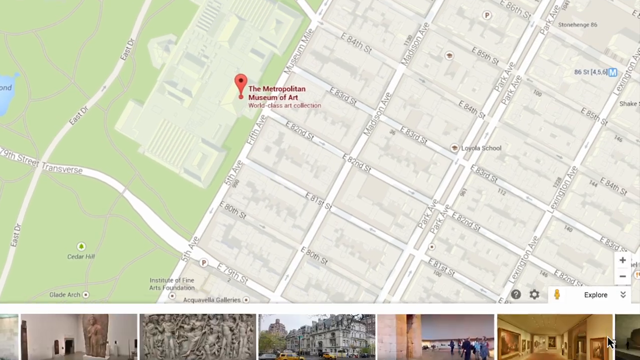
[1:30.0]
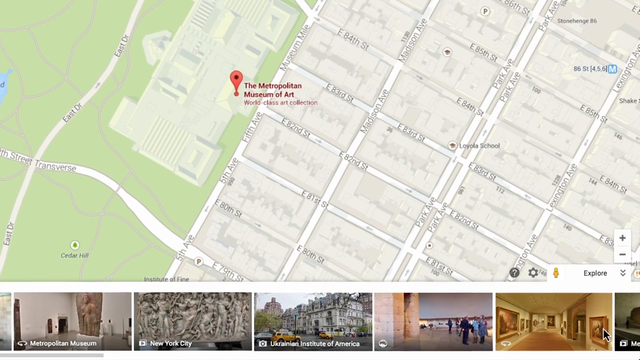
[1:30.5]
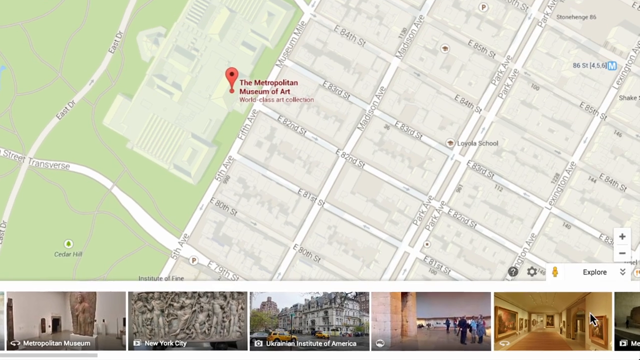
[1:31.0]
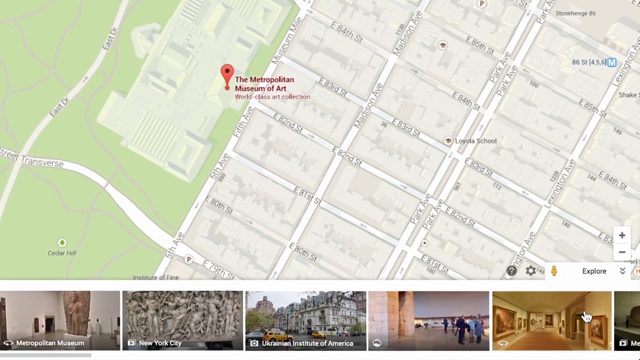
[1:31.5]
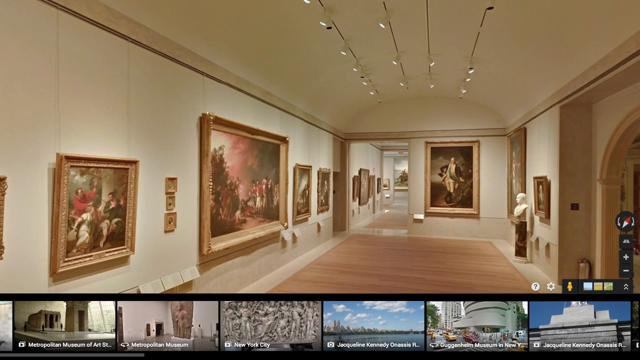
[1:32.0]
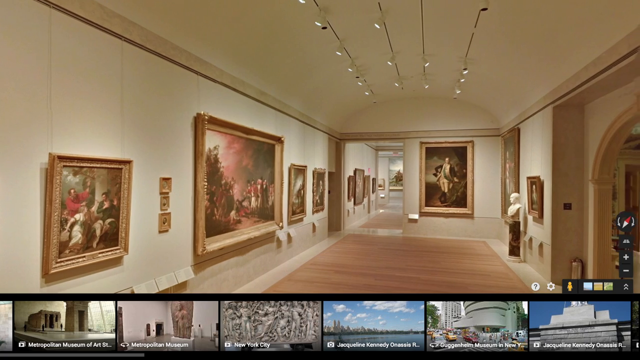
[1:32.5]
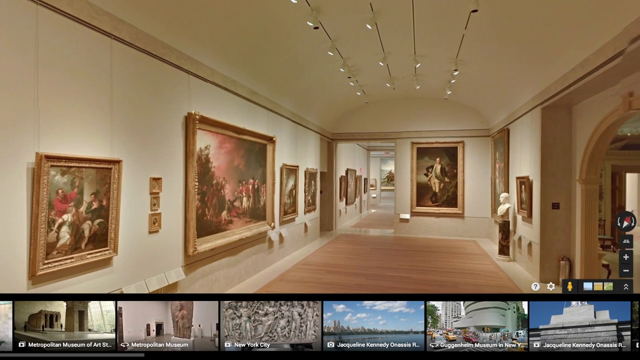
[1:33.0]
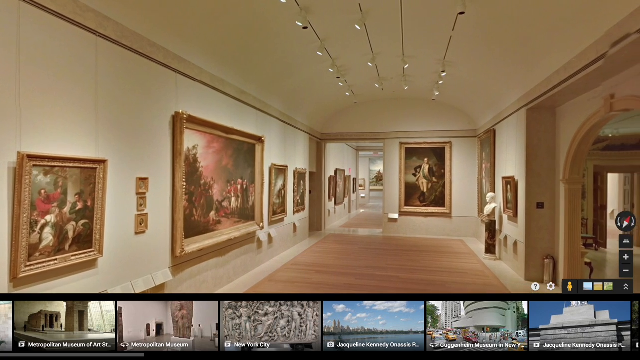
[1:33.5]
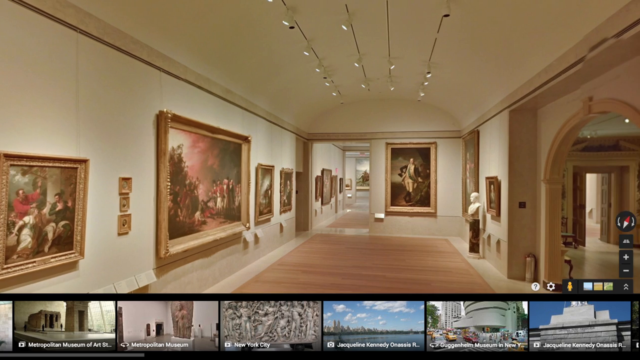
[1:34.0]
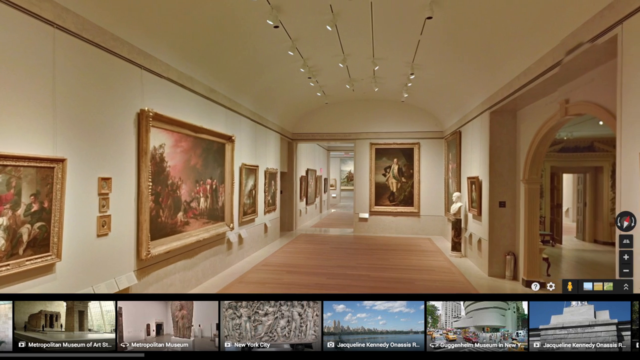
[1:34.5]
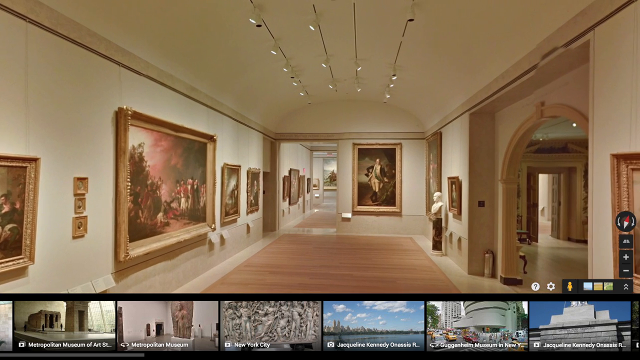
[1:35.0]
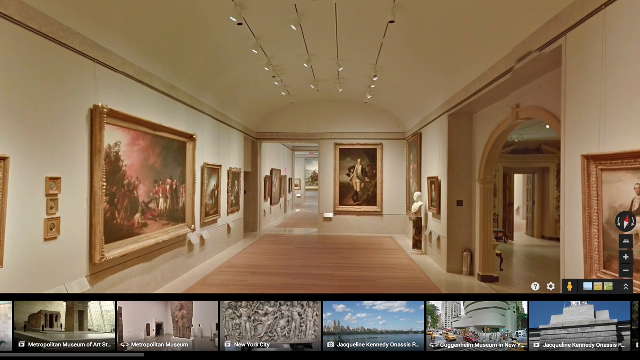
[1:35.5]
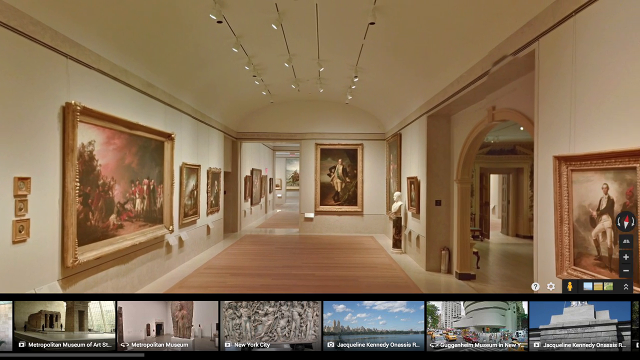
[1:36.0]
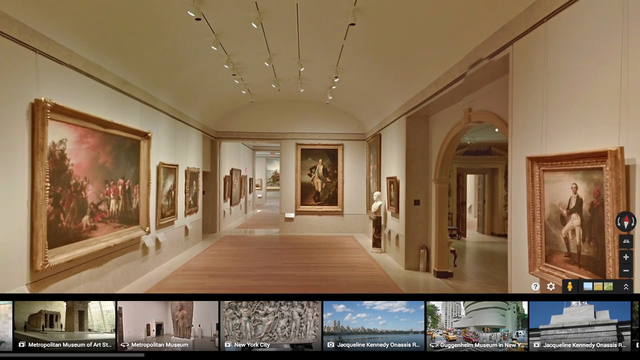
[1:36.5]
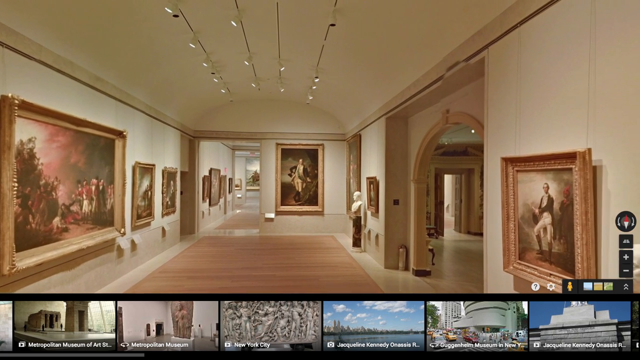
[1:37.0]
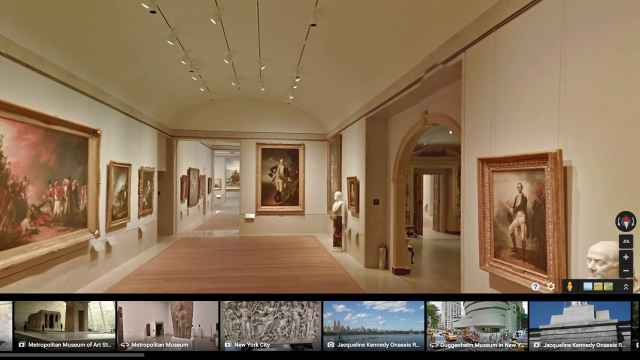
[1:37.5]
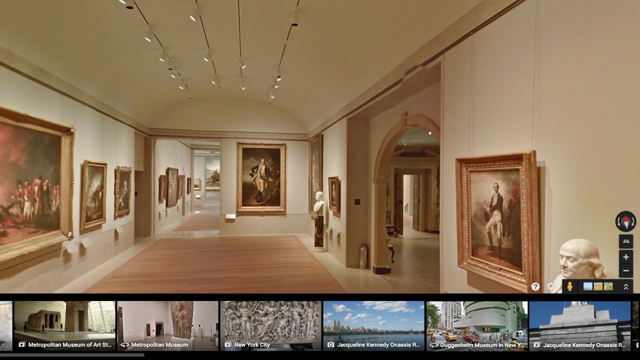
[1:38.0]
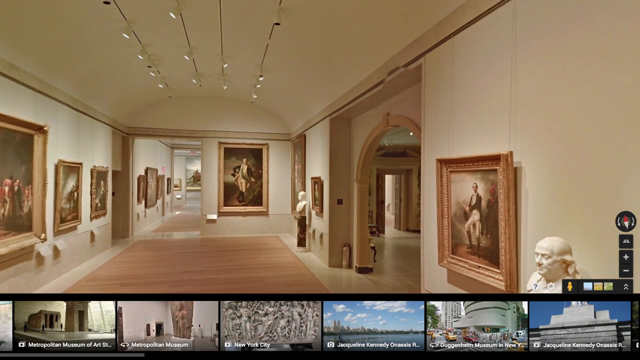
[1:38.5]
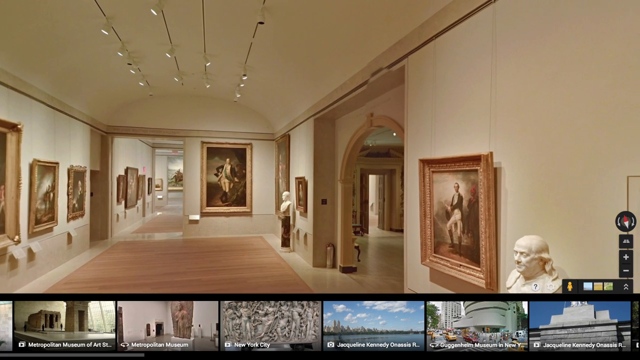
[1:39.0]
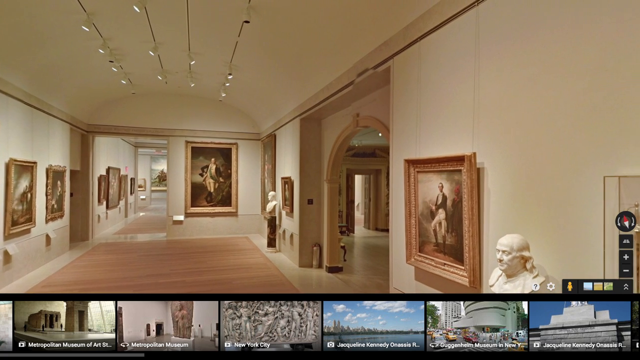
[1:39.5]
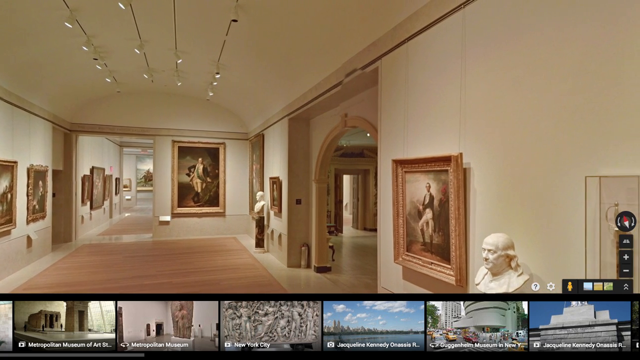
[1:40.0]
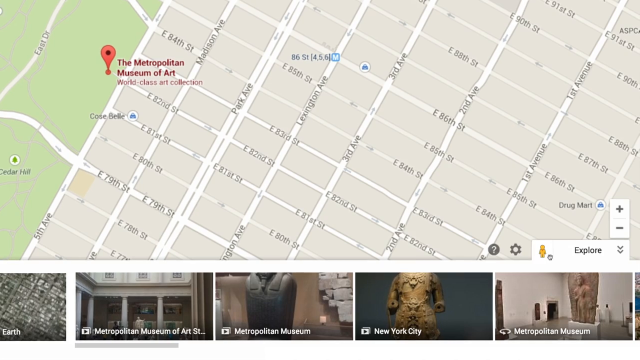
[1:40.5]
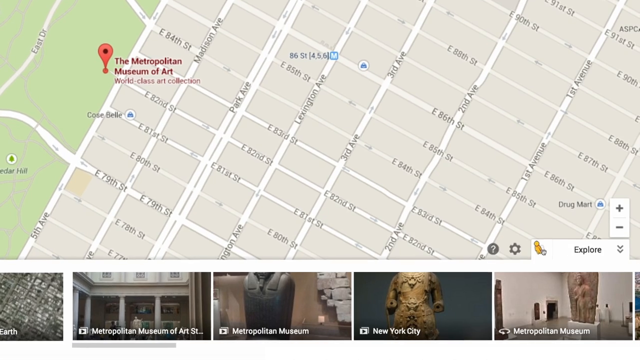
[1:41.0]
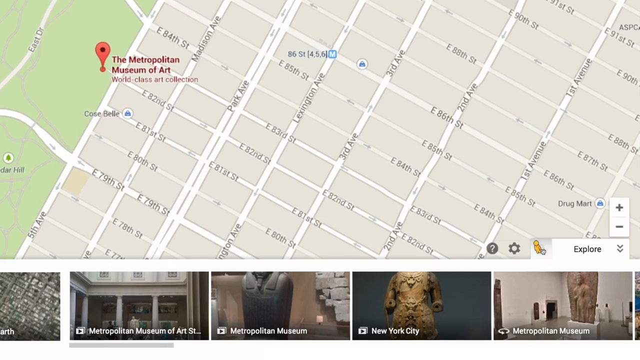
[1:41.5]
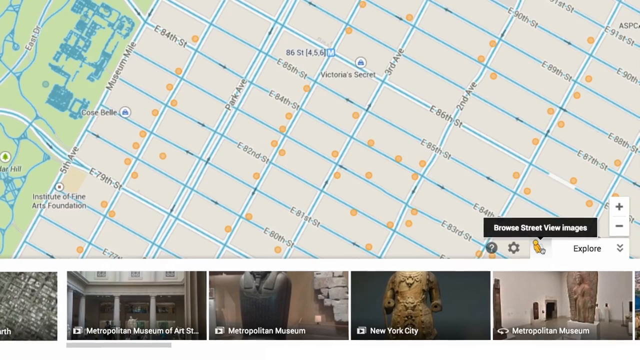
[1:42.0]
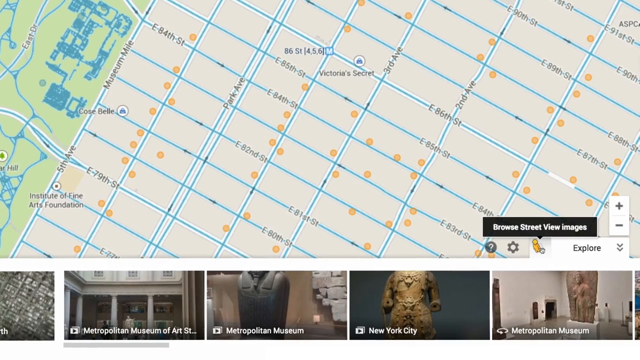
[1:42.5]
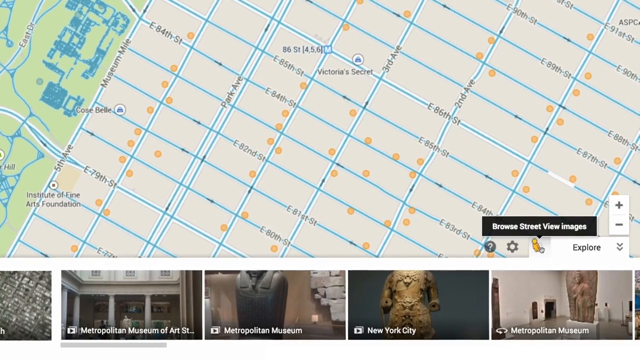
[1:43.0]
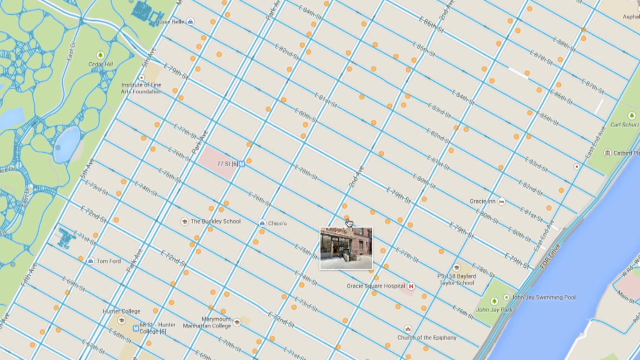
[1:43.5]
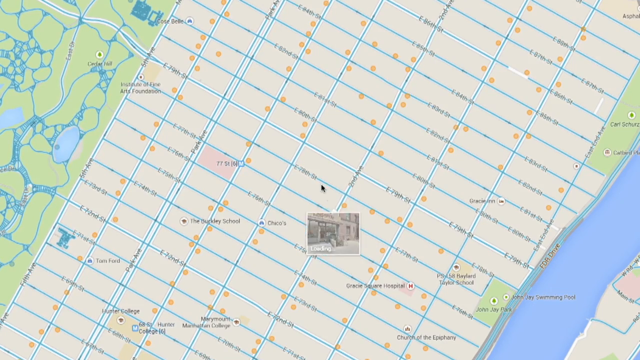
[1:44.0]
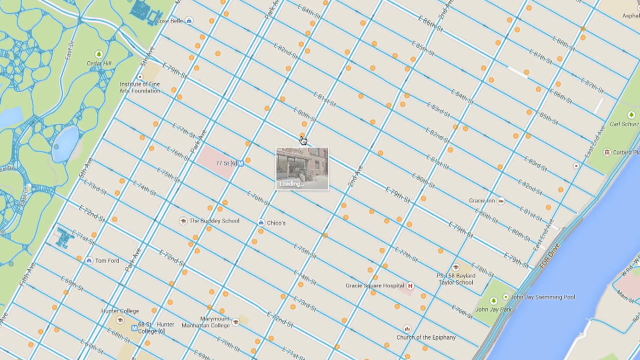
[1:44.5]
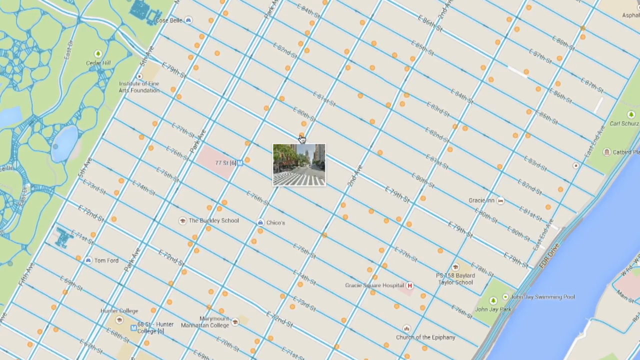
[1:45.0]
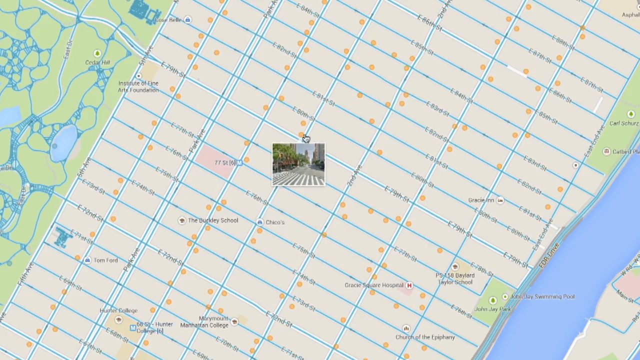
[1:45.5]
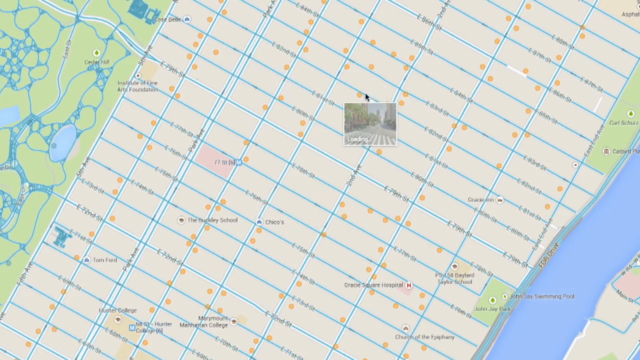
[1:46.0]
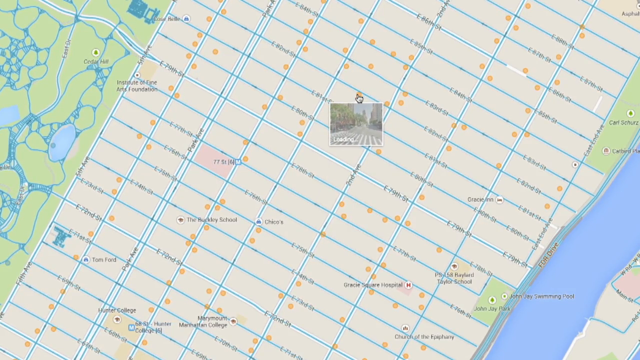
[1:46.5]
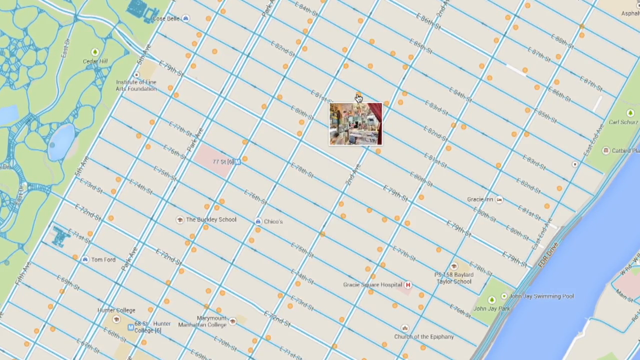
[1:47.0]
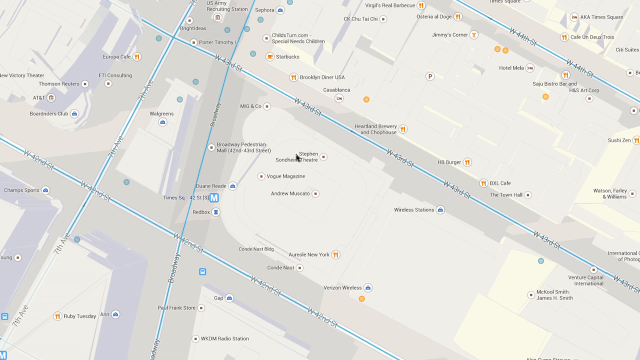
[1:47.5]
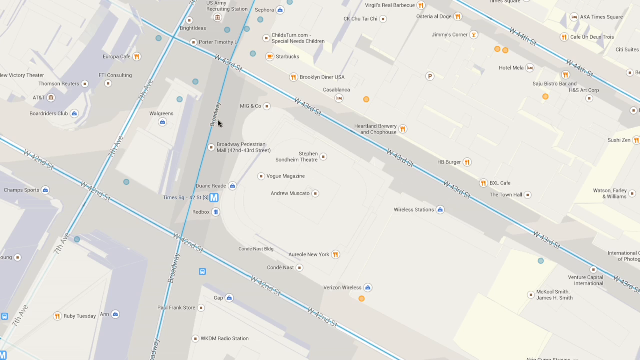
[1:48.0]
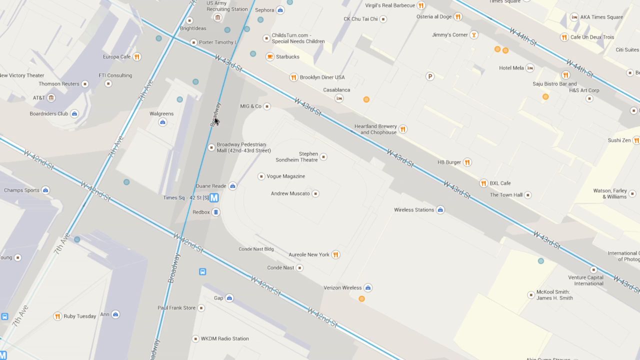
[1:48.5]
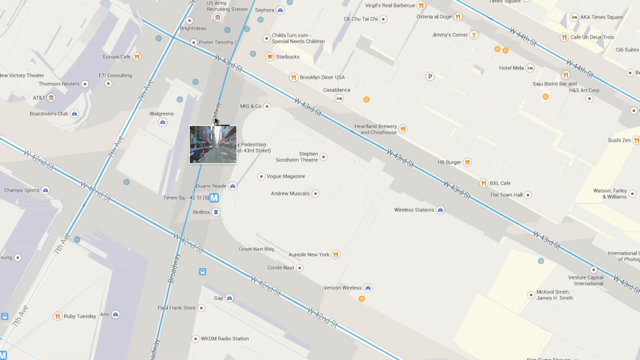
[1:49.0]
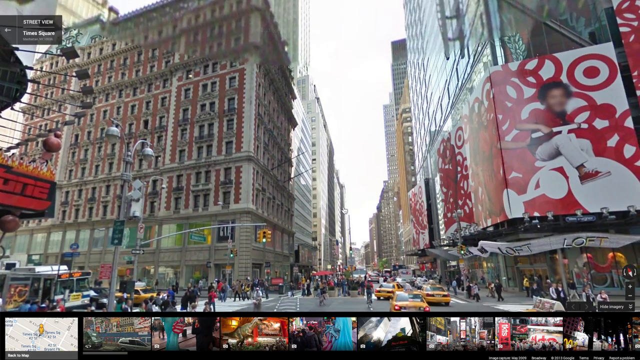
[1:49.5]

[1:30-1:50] An image appears to show the inside of a museum. On Google Maps, the person clicks on different roads. An image of Times Square in New York City with Target ads appears, then the inside of an art gallery with large paintings hanging on walls, wooden floors, minimal lighting on the top, and a statue, a bust. The mouse is dragging, with something like a picture icon dragging along with it. At the very bottom of the screen are 6 boxes of different parts of New York City, apparently including the Metropolitan Museum of Art and some other places. The user appears to be clicking on different parts of the map, bringing up Times Square and different New York City landmarks such as the museums.